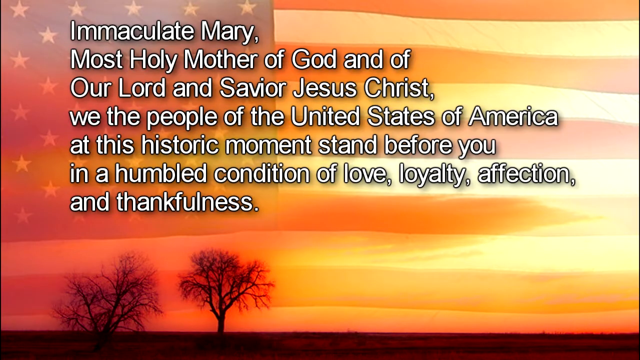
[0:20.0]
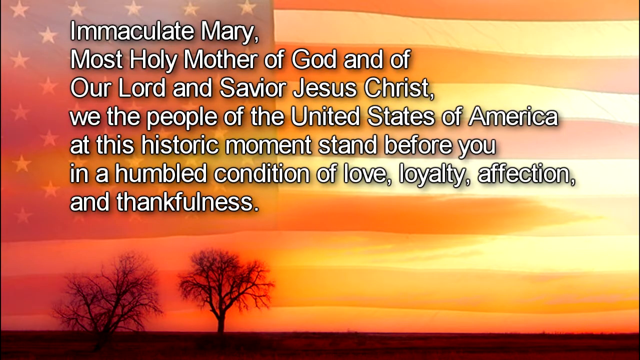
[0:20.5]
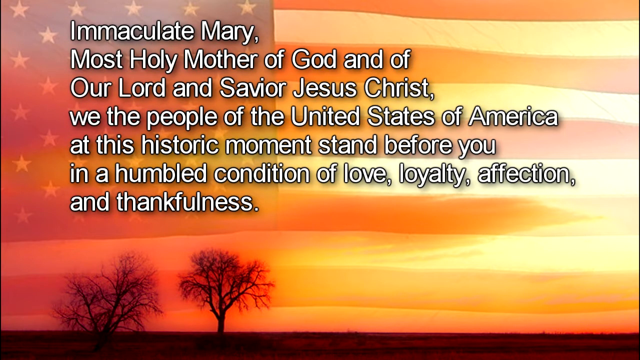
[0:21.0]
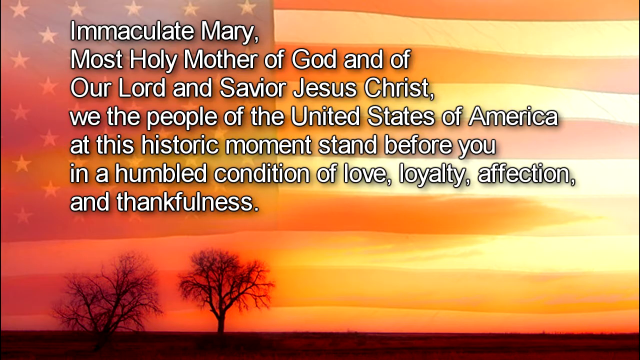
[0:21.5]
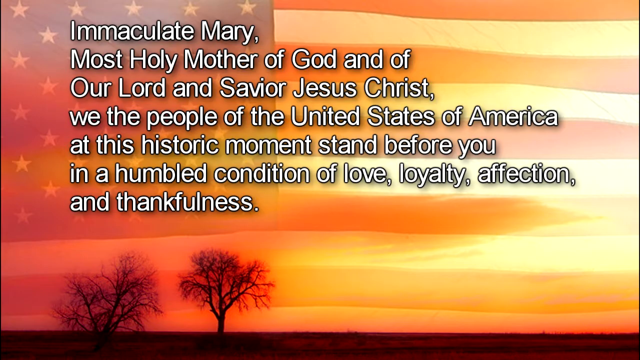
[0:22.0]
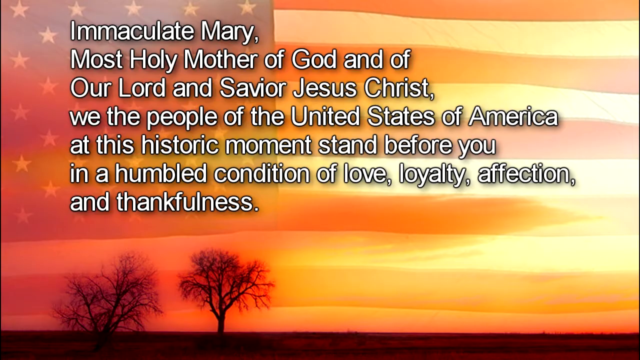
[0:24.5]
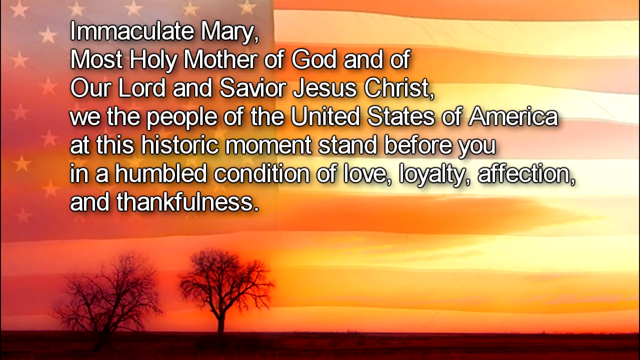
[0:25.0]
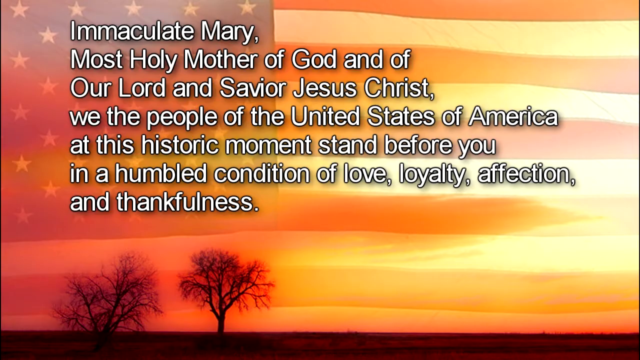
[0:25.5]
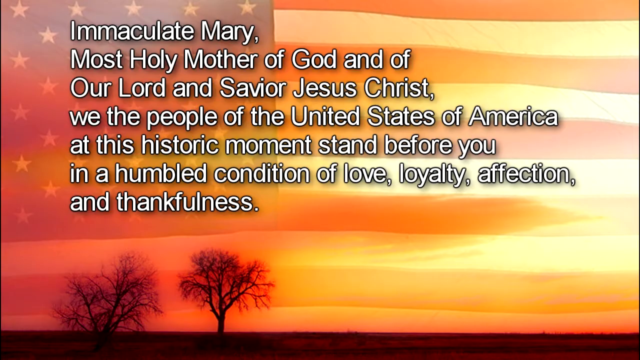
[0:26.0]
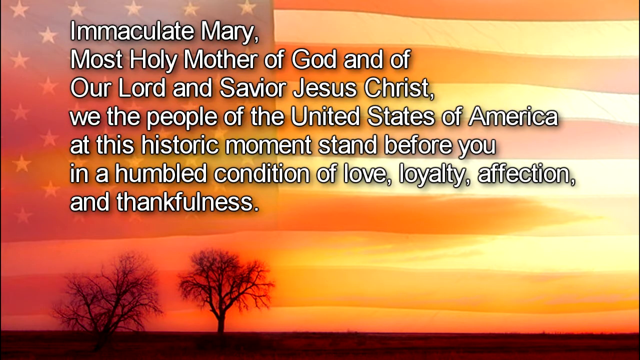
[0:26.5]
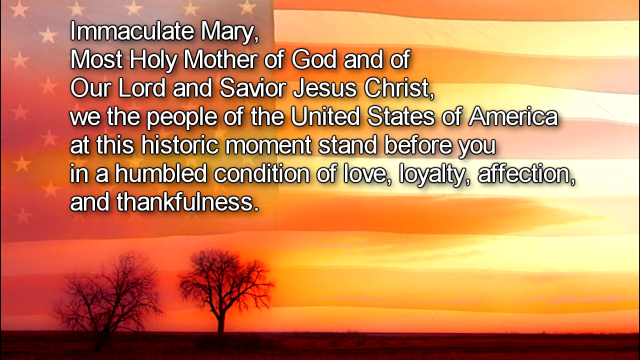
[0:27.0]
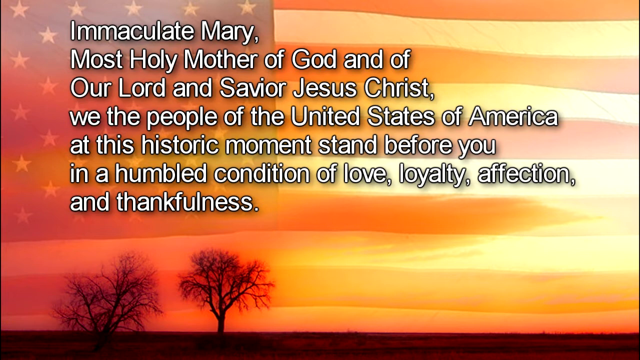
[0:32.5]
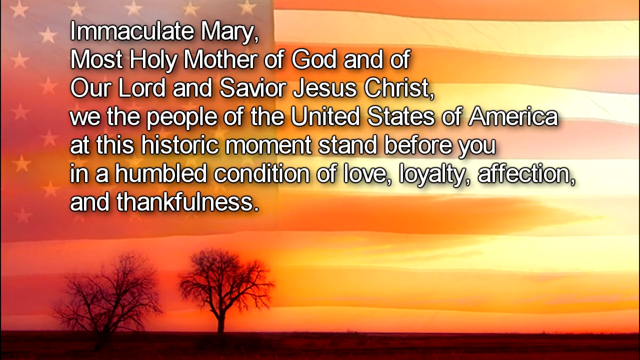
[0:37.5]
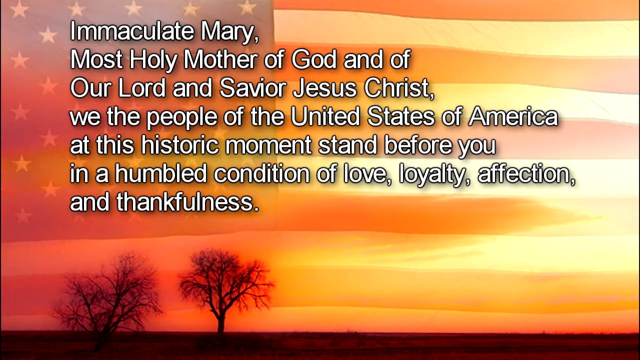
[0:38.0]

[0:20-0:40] A page shows a prayer reading "Immaculate Mary, Most Holy Mother of God, and of our Lord and Savior, Jesus Christ, we the people of the United States of America, at this historic moment, stand before you in a humbled condition of love, loyalty, affection, and thankfulness." The prayer is on a picture of an American flag that is somewhat blurred, possibly with some red coloring to it. Two trees that look kind of like winter trees are in the lower left-hand corner of the picture. The whole prayer is on that section. Many of the words begin with a capital letter: "Immaculate," "Mary," "Most," "Holy," "Mother," "God," "Lord," "Savior," "Jesus," "Christ," "United," "States" and "America," while all the other words are lowercase.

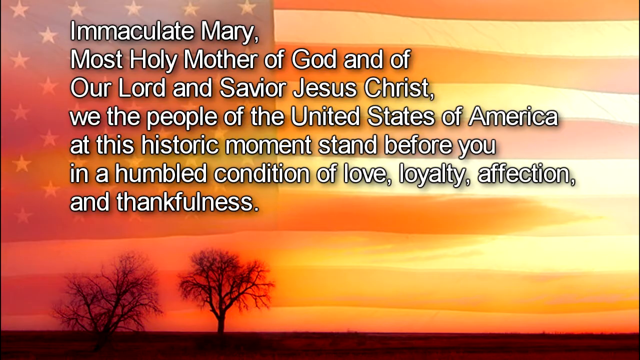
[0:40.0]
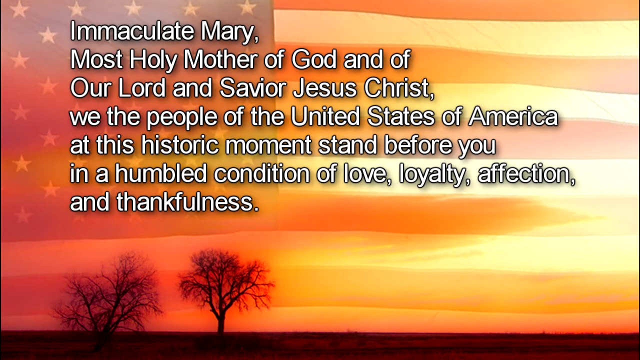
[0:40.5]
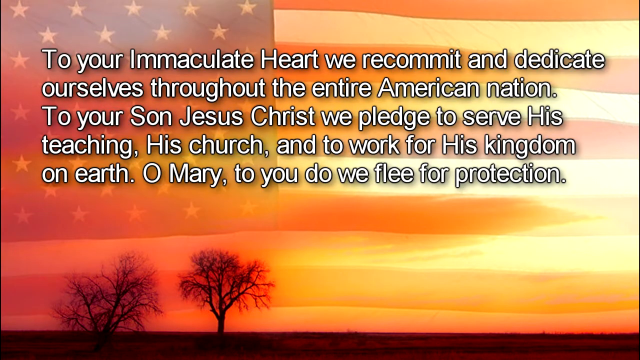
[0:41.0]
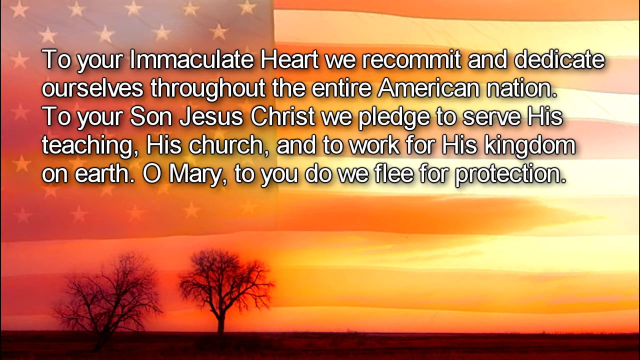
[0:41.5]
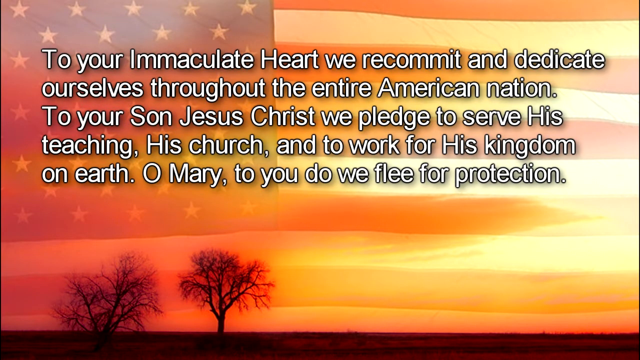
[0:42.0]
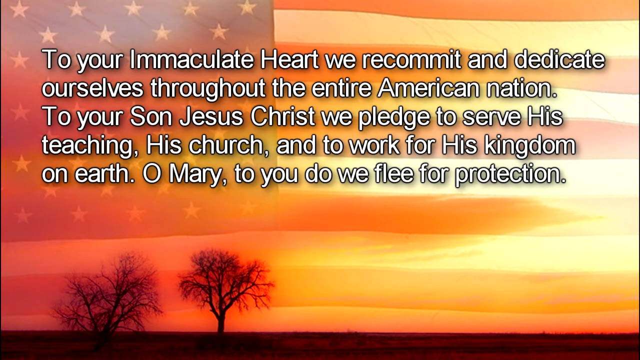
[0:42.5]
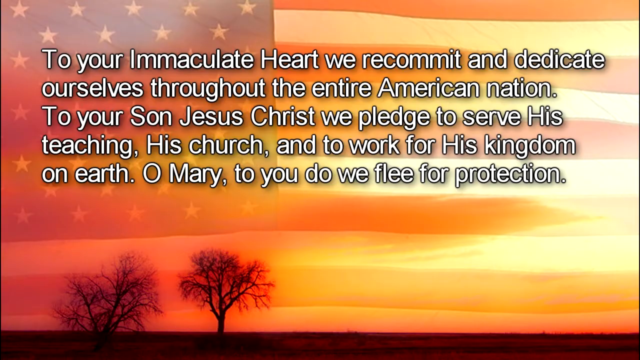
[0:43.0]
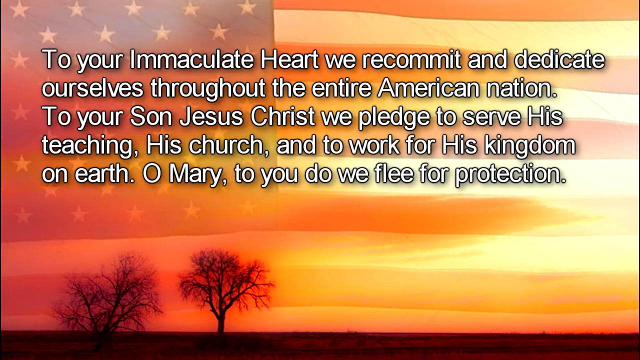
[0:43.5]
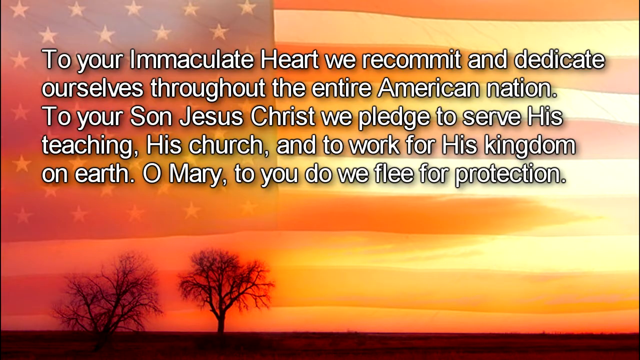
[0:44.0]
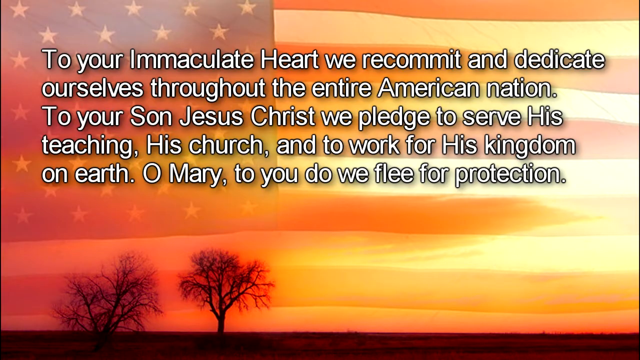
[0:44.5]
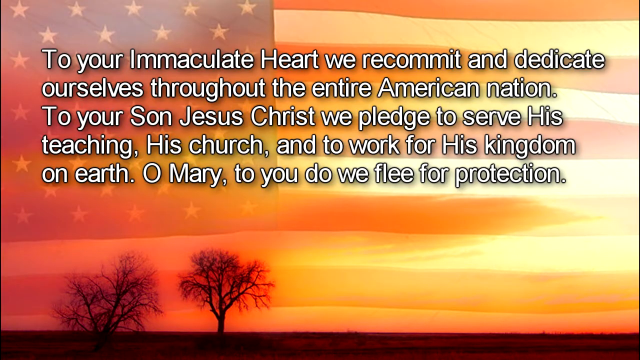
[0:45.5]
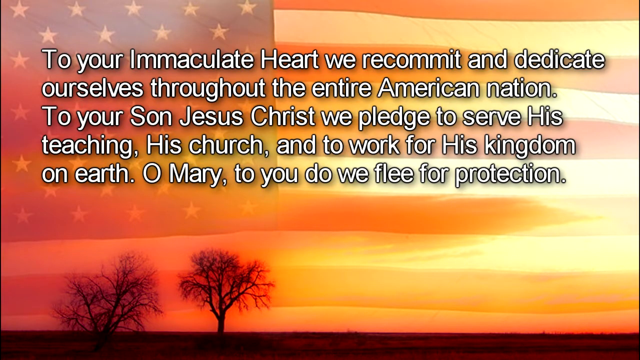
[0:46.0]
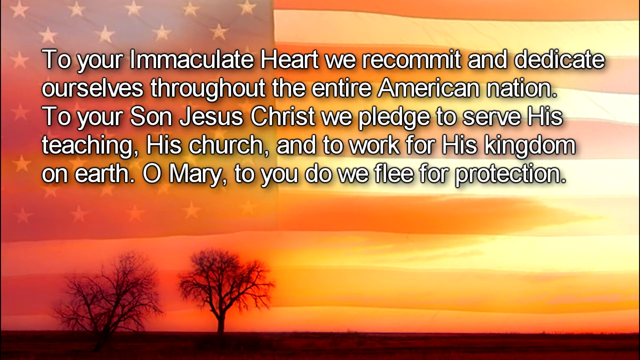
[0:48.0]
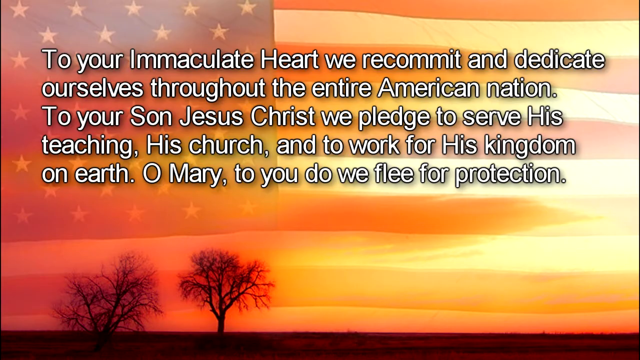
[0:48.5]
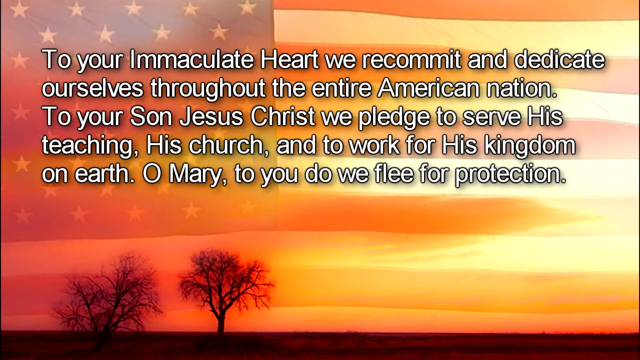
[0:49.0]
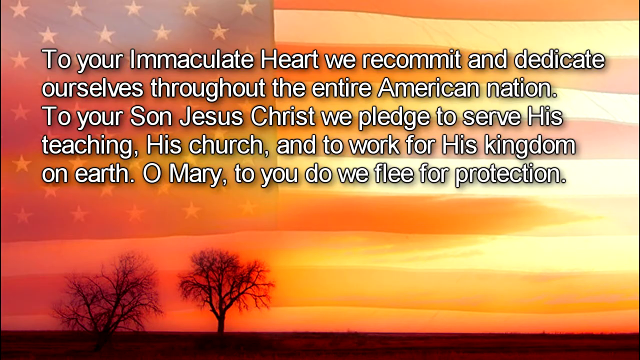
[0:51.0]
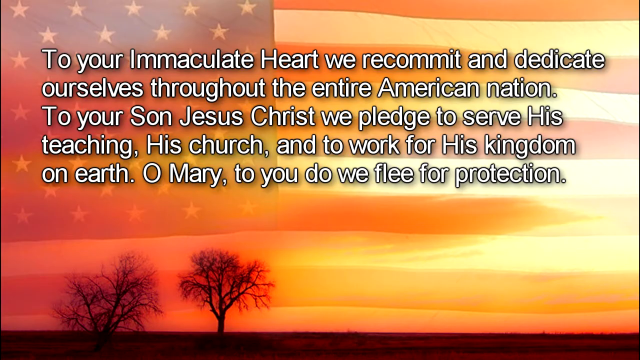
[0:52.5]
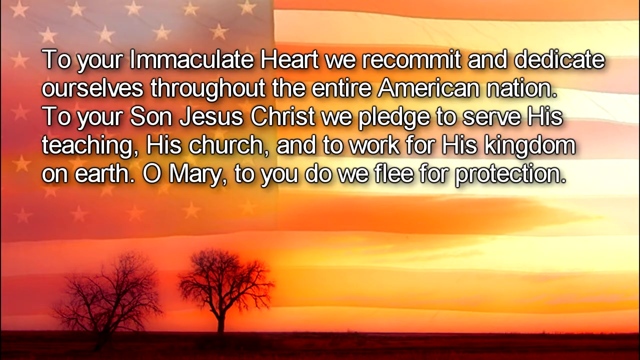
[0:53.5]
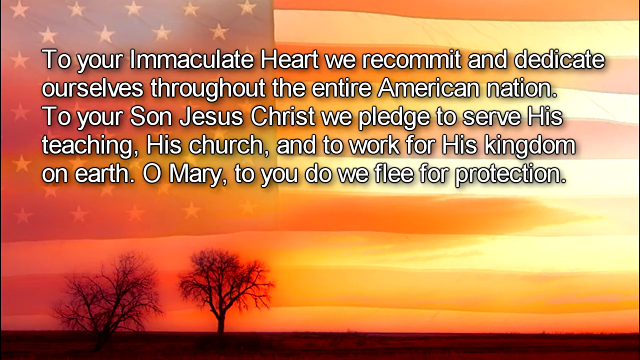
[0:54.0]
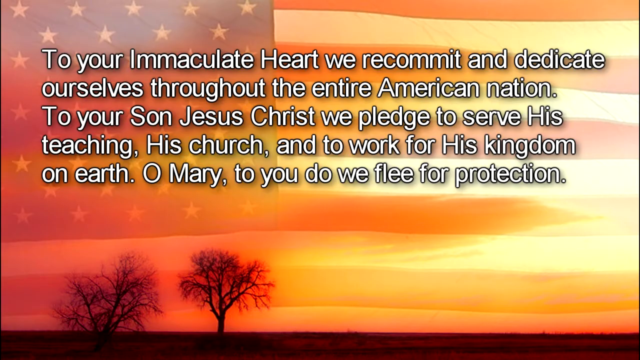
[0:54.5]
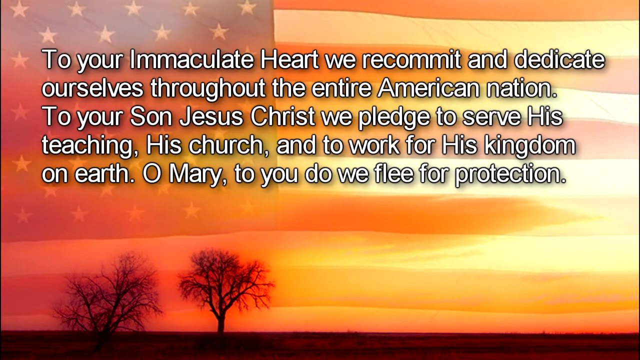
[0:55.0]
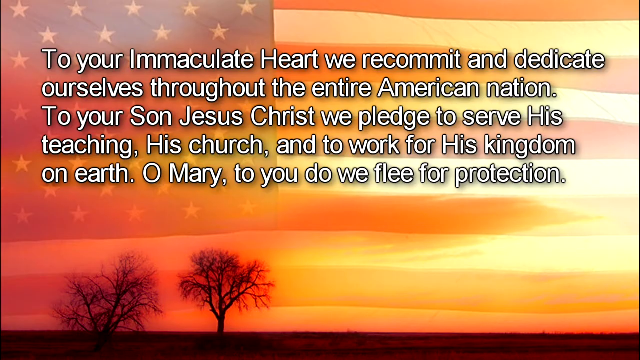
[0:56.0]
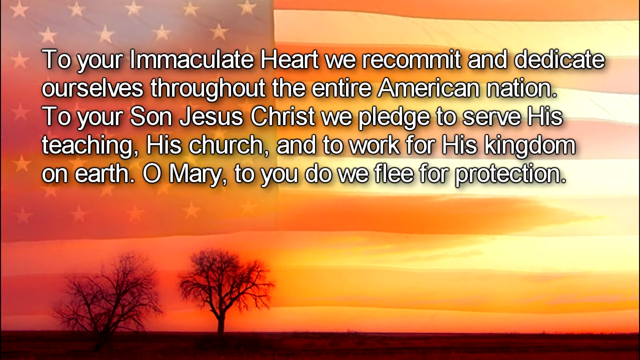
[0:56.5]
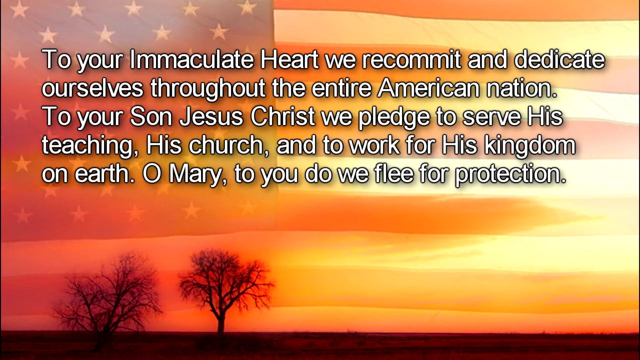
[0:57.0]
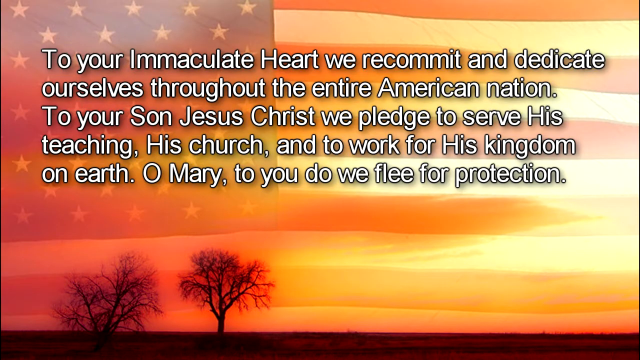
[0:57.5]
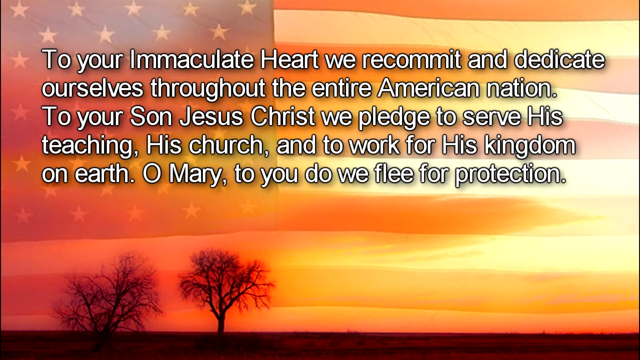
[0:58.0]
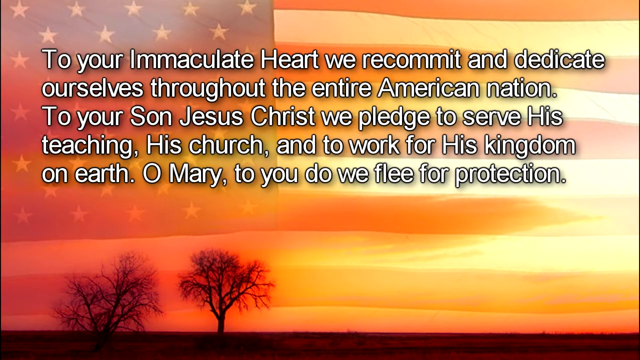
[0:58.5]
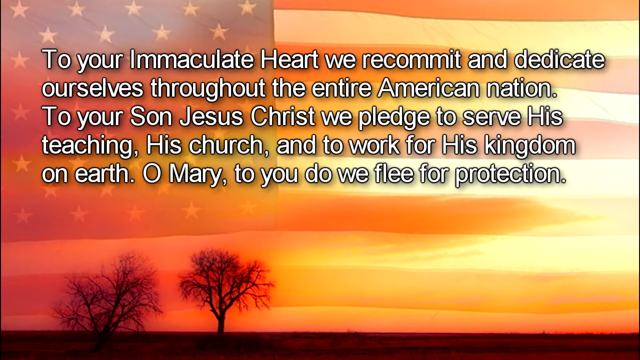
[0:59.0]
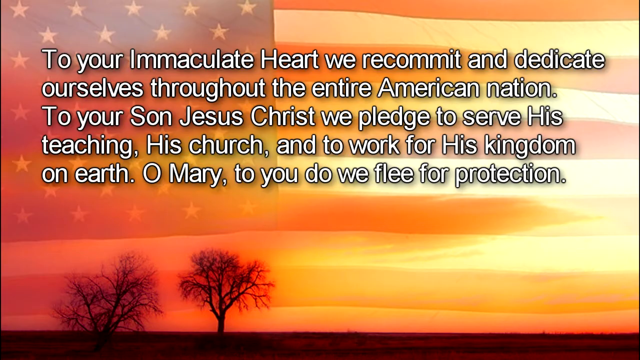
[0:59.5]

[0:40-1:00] A prayer appears in white font outlined in black so that it stands out. At the top it reads "Immaculate Mary," followed by a comma, then "Most Holy Mother of God and of our Lord and Savior Jesus Christ," followed by another comma, then "We the people of the United States of America, at this historic moment, stand before you in a humbled condition of love, loyalty, affection, and thankfulness." An American flag is in the background underneath the words, and the background stays the same. The words then change to new white text lined in black, readable on top of the flag: "To your immaculate heart, we recommit and dedicate ourselves throughout the entire American nation. To your son Jesus Christ, we pledge to serve his teaching, his church, and to work for his kingdom on earth. O Mary, to you do we flee for protection."